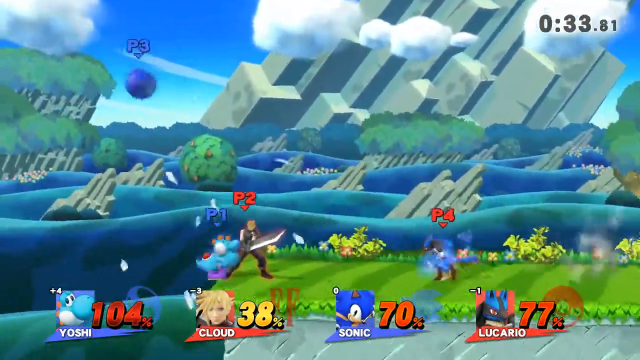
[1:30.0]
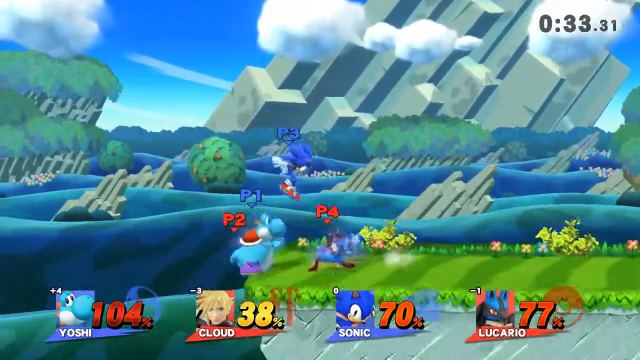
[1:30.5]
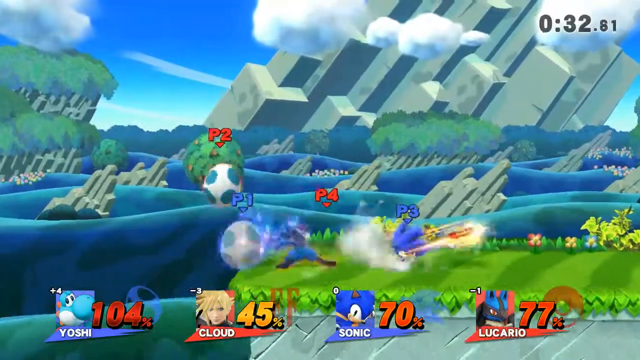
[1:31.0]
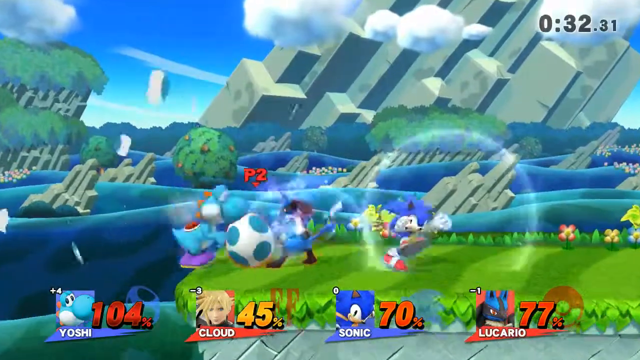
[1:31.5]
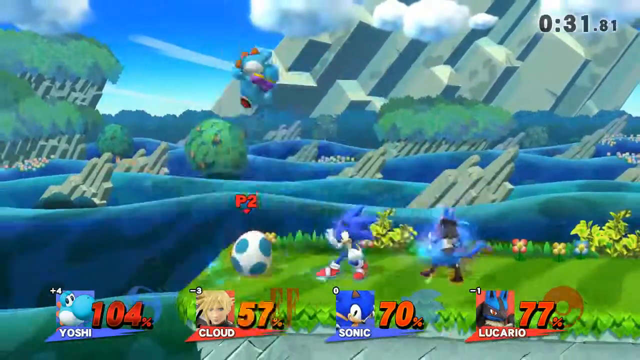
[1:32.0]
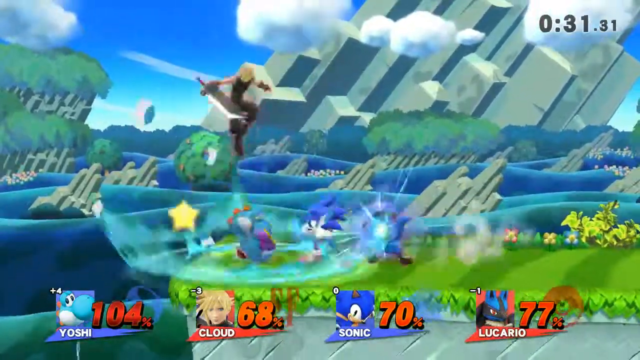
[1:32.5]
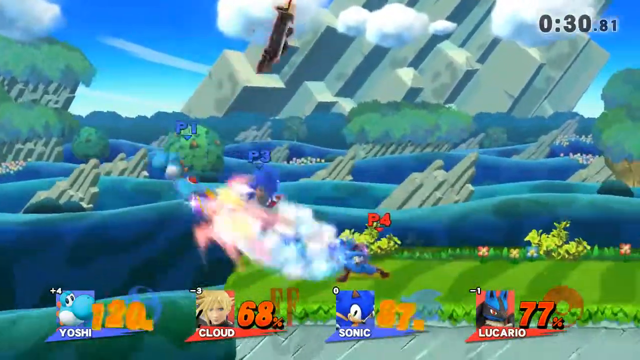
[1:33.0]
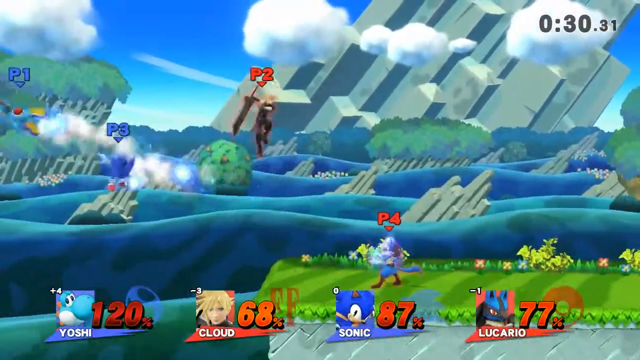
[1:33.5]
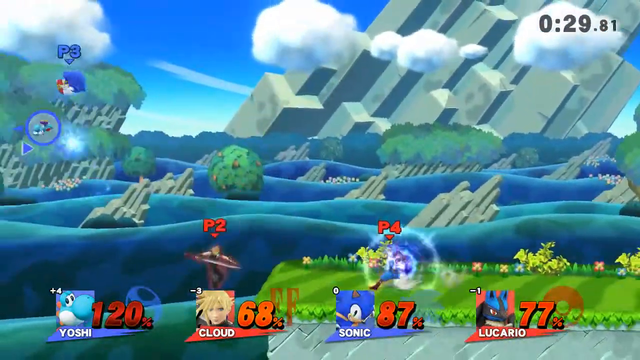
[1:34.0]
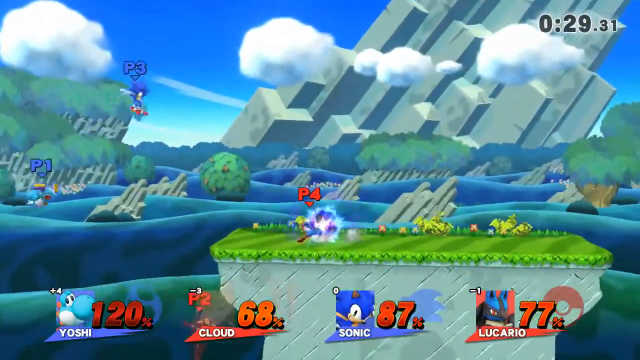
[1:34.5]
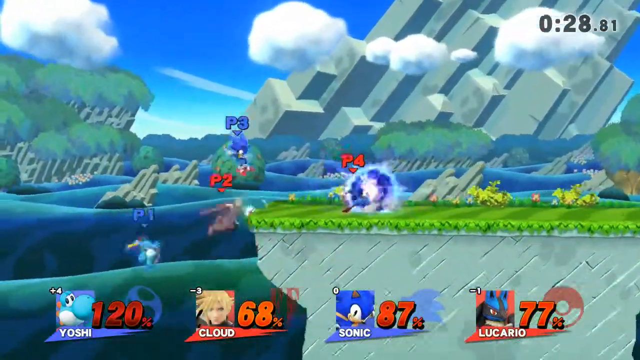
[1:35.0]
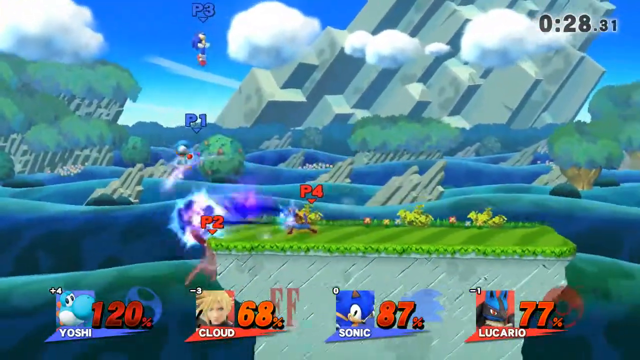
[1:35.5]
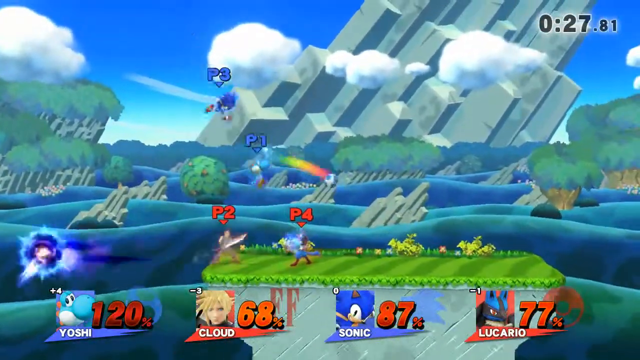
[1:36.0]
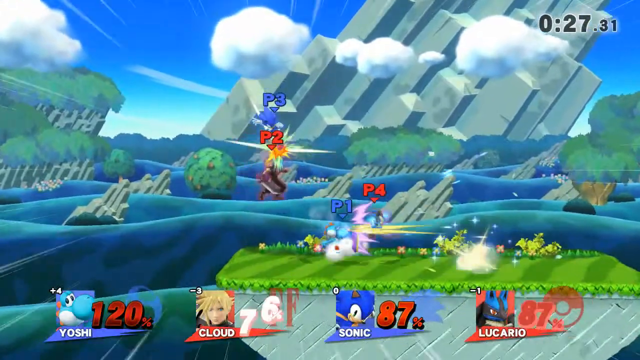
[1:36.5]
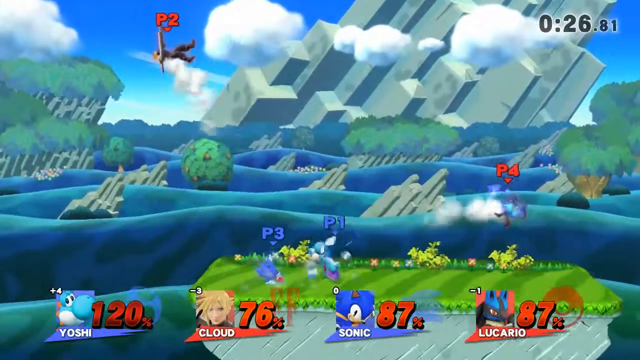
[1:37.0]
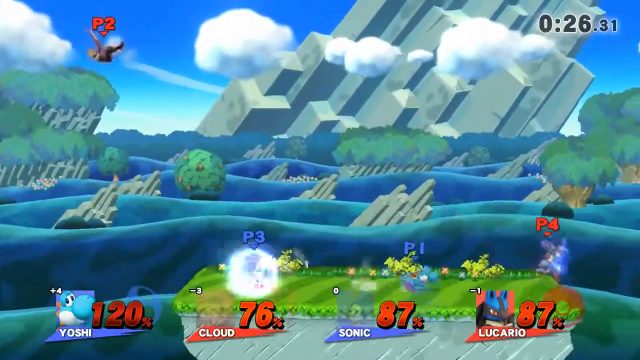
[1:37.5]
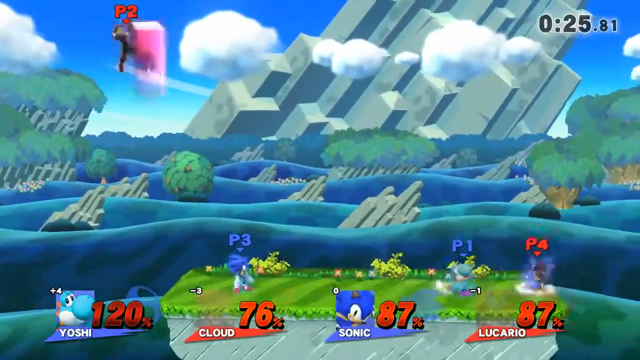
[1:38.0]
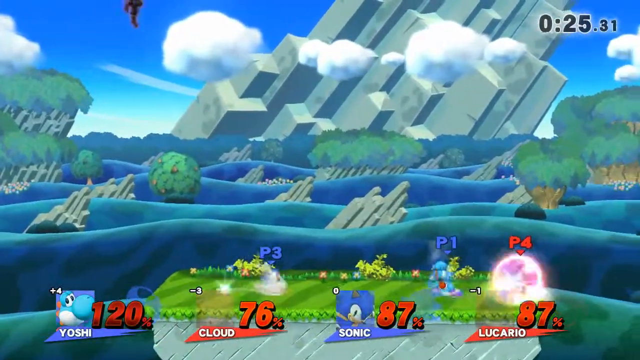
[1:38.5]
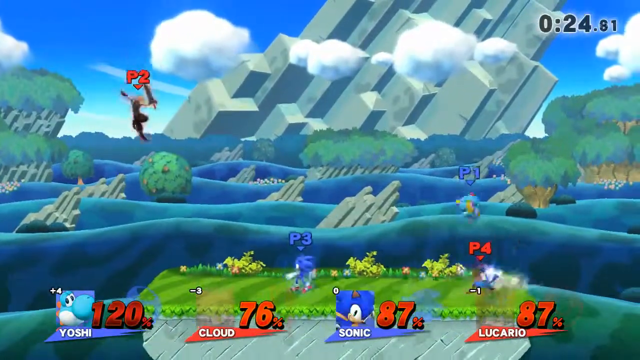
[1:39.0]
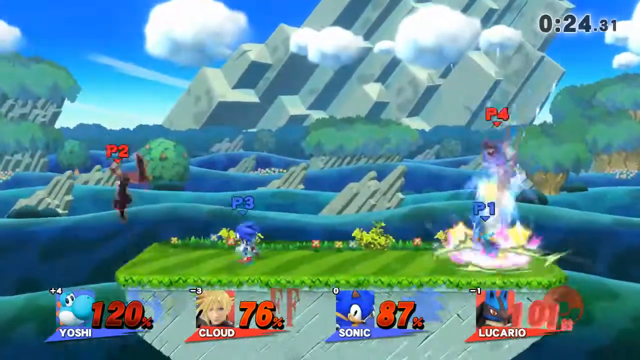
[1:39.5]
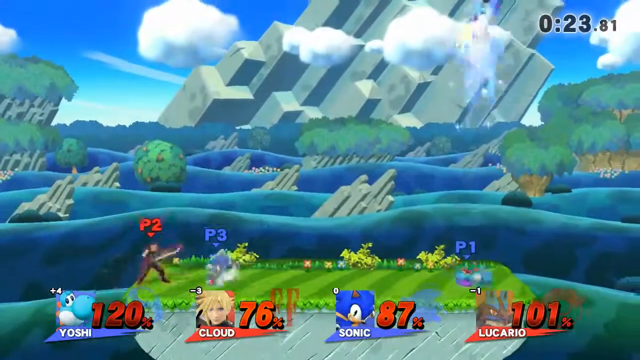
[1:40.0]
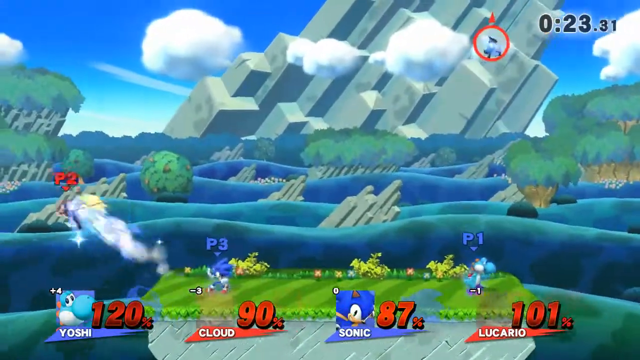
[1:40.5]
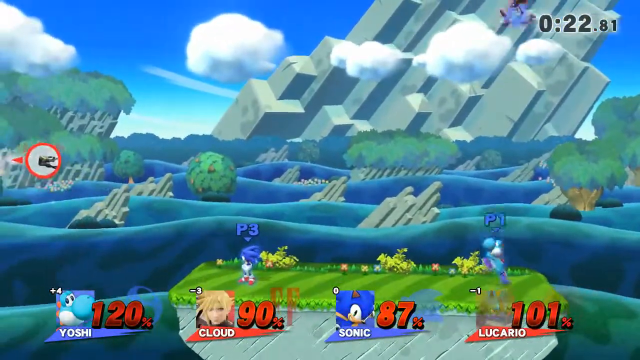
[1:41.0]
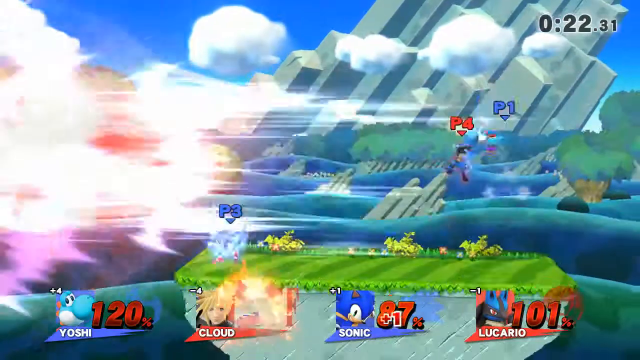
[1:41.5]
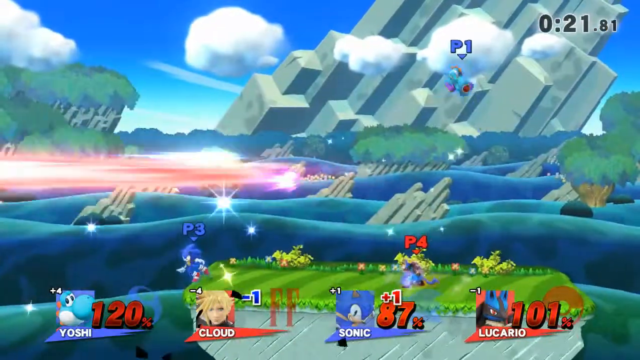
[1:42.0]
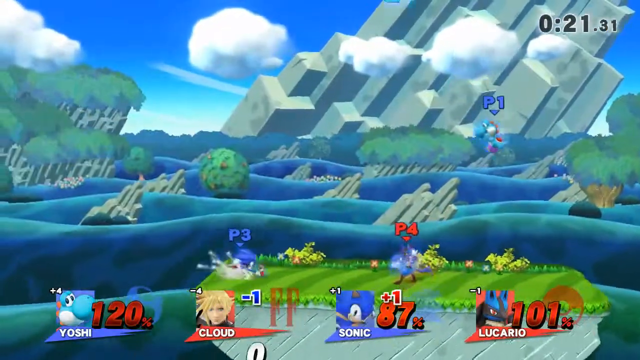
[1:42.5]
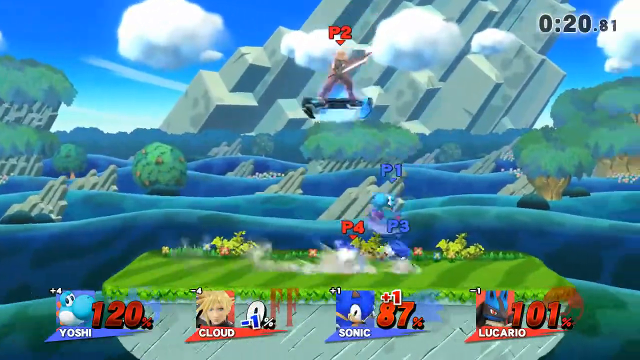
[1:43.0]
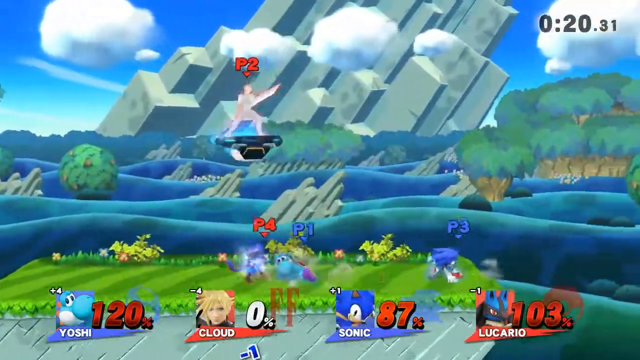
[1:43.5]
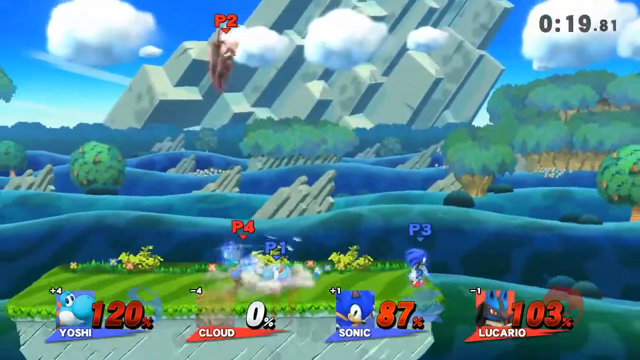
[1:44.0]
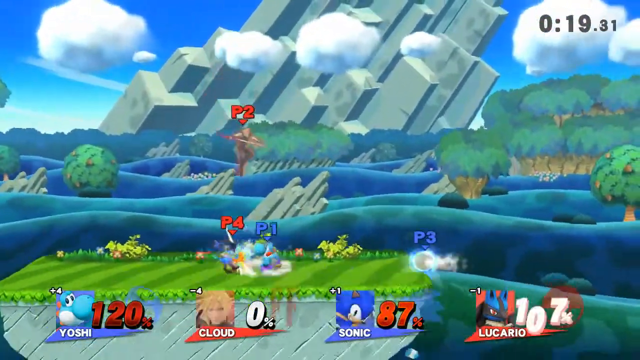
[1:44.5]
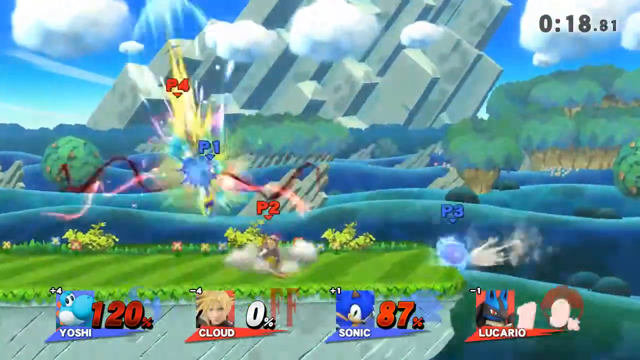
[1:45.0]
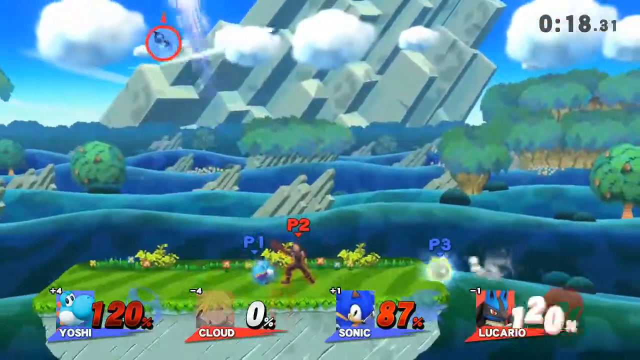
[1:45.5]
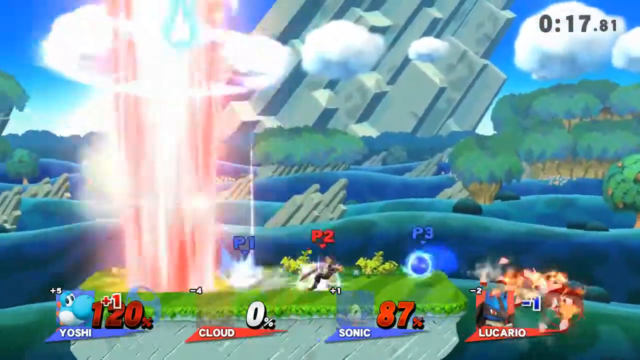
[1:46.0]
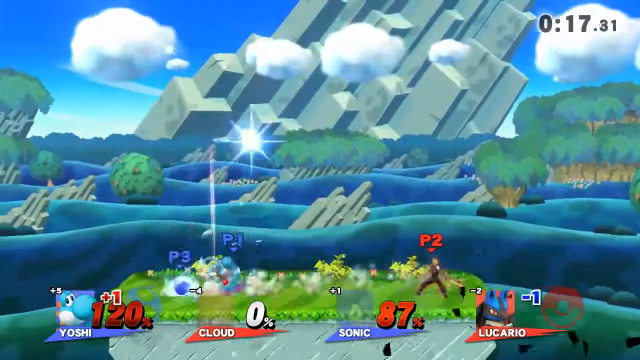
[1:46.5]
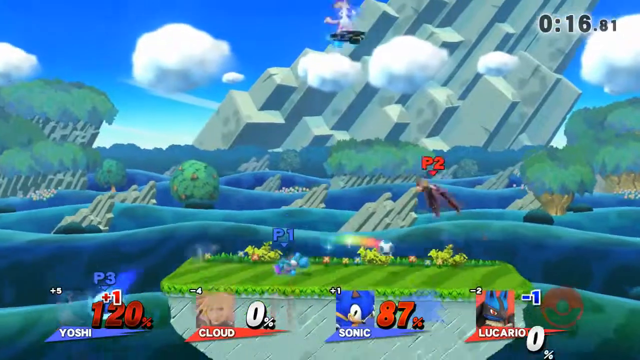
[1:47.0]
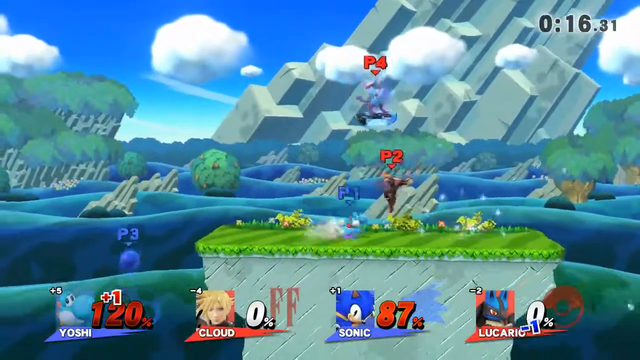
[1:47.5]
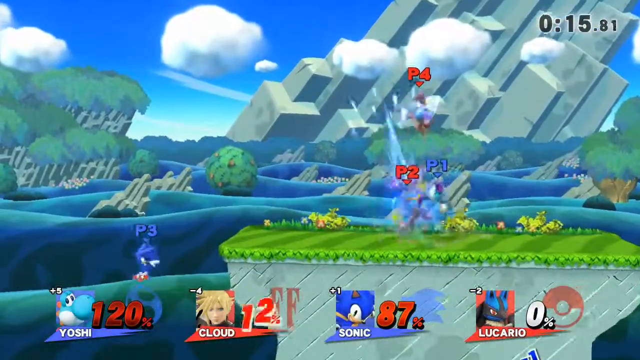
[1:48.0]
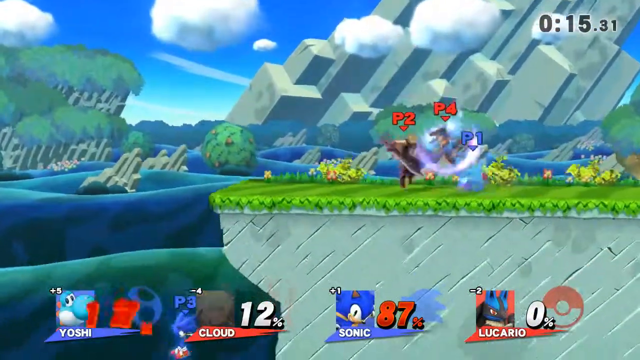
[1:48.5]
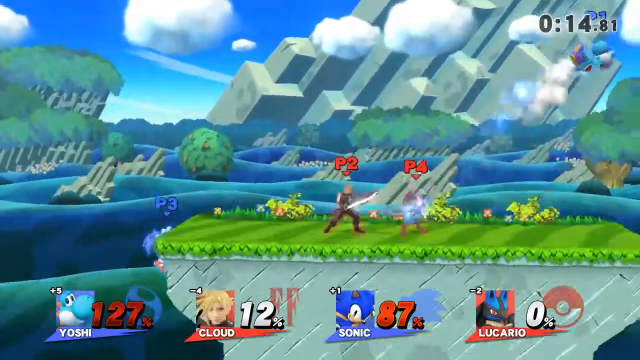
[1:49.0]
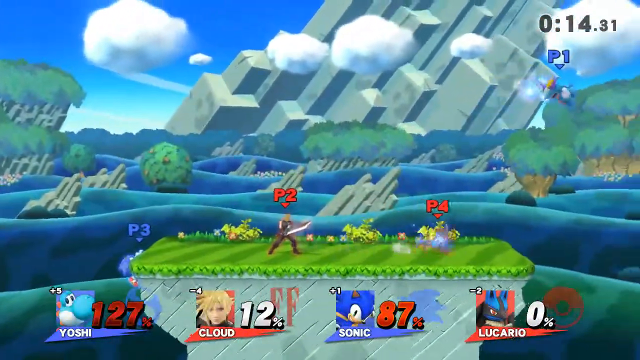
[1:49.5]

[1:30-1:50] At the start, Yoshi has 104%, Cloud 38%, Sonic 70%, and Lucario 77%. The red team repeatedly comes close to knocking the blue team off but fails, while Cloud is knocked off another time. Sonic is about to go down, then jumps up and catches himself, so he is not knocked off and keeps his score. By the end, Yoshi has 127%, Cloud 12%, Sonic 87%, and Lucario 0%, suggesting both red players were knocked off. The clock is at 15 seconds.